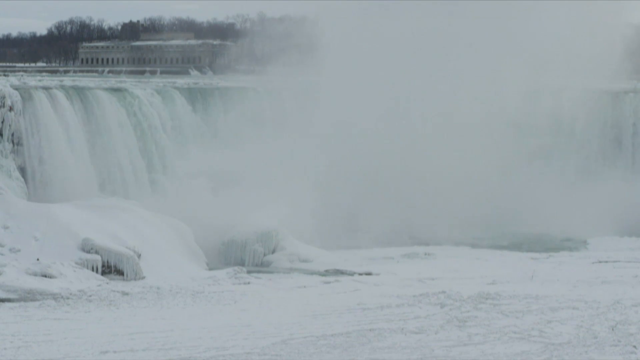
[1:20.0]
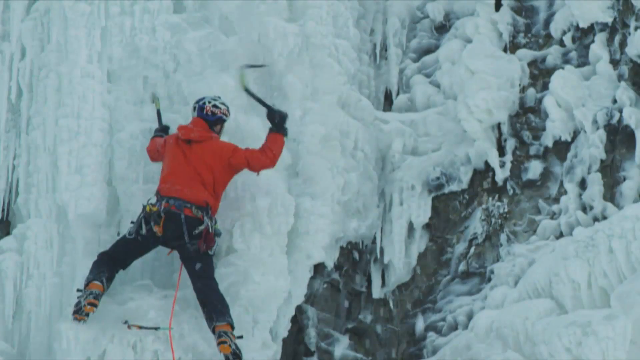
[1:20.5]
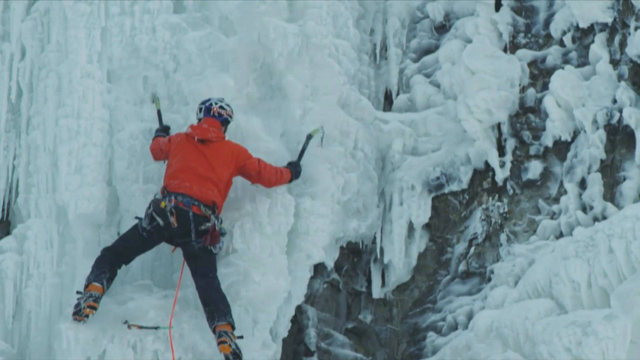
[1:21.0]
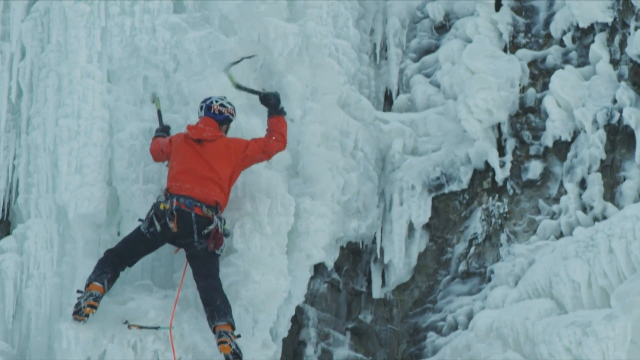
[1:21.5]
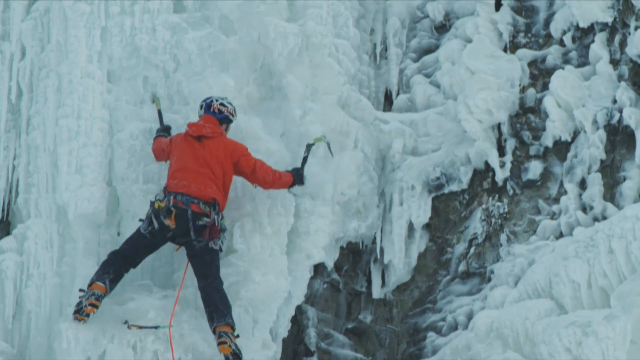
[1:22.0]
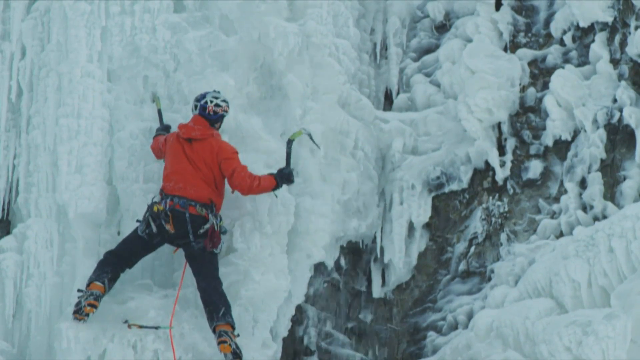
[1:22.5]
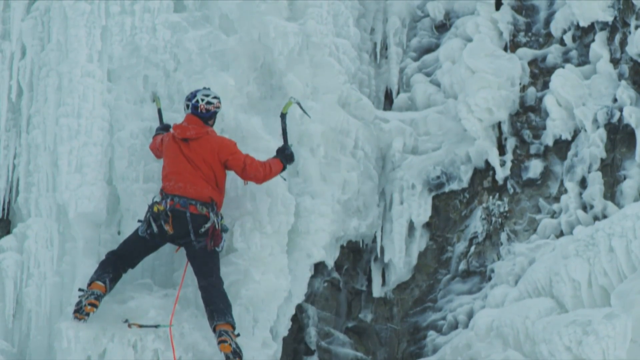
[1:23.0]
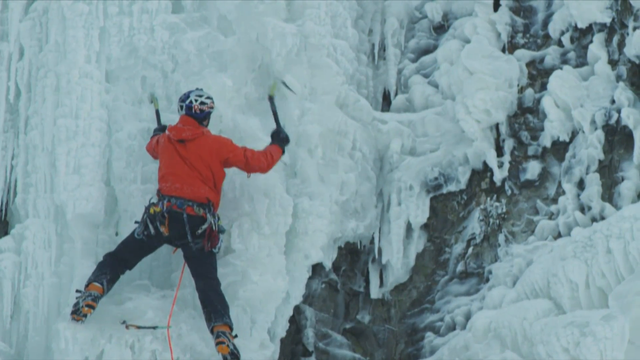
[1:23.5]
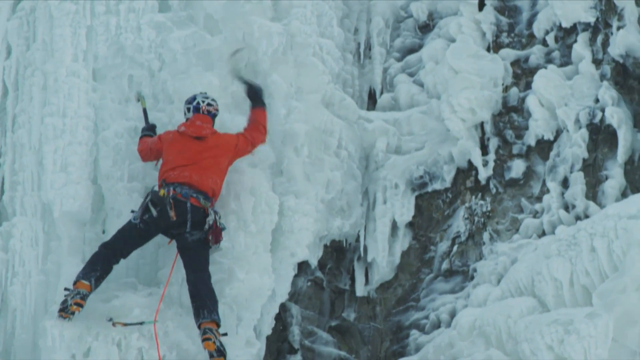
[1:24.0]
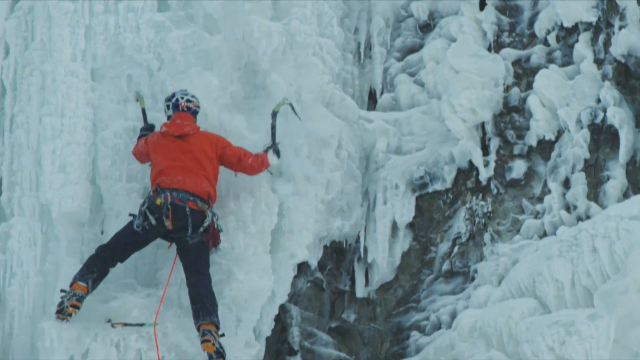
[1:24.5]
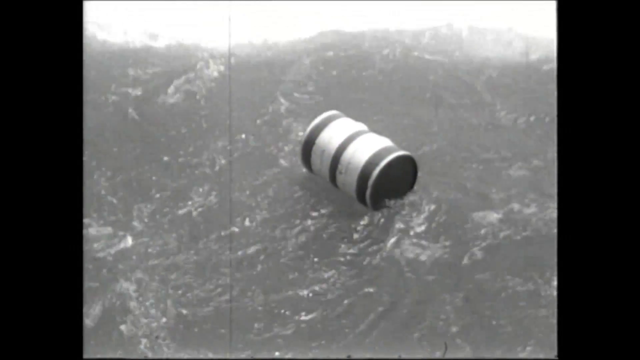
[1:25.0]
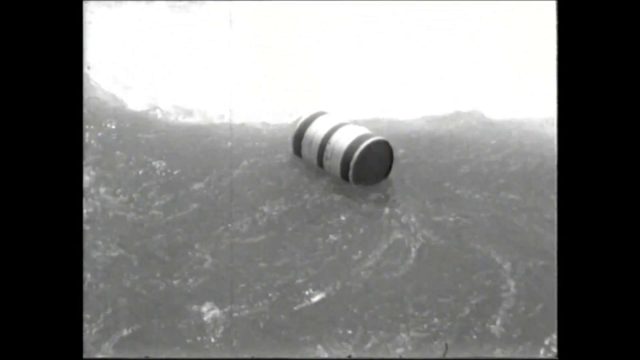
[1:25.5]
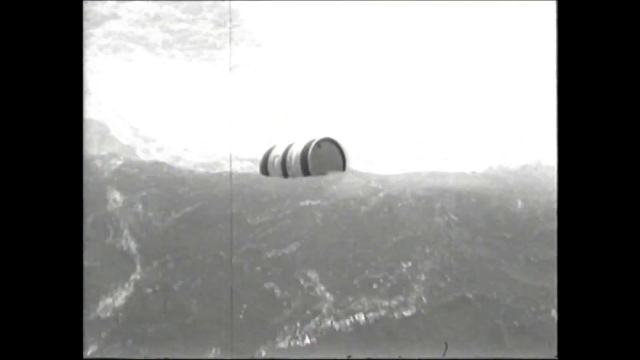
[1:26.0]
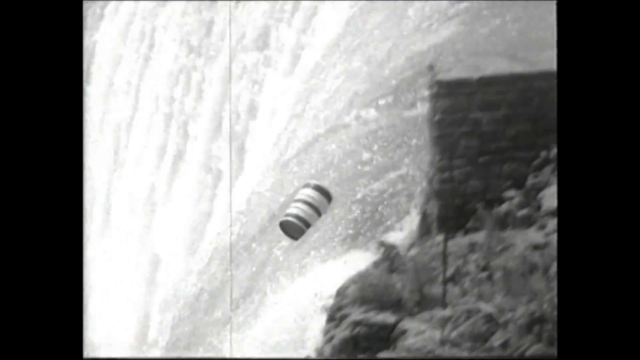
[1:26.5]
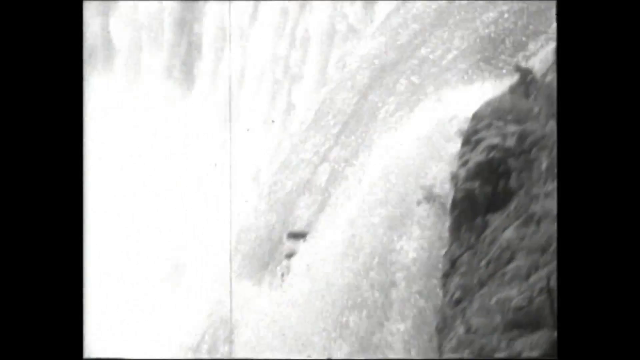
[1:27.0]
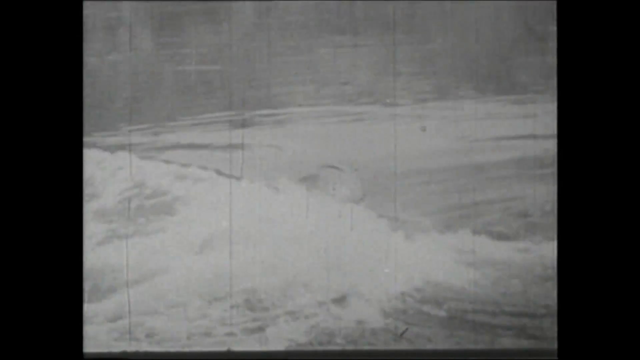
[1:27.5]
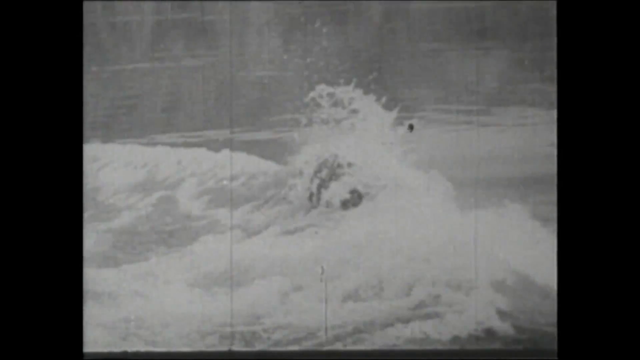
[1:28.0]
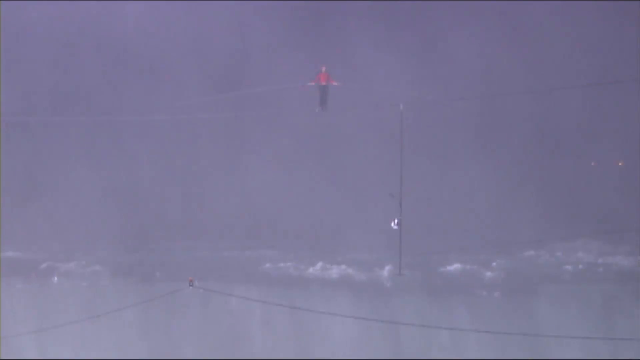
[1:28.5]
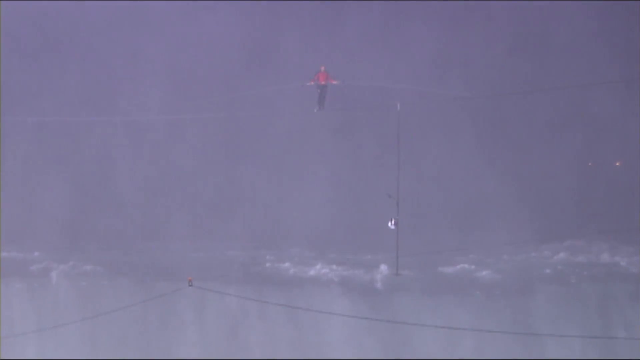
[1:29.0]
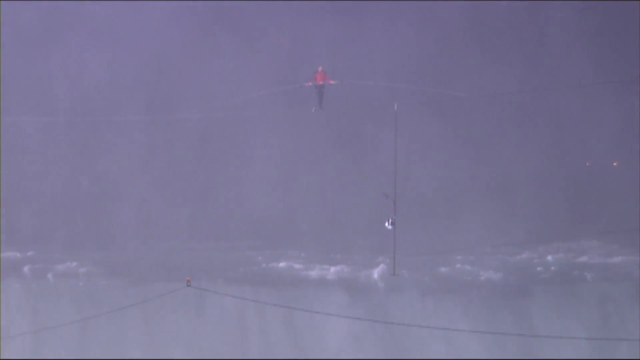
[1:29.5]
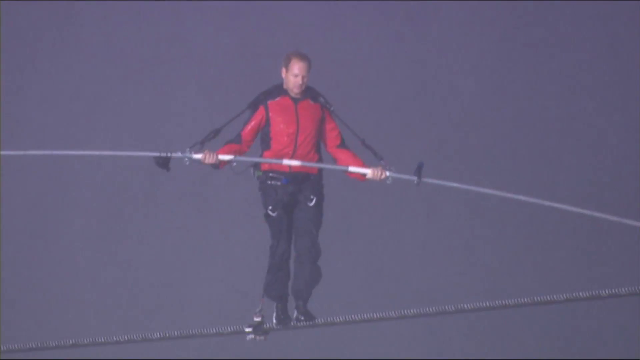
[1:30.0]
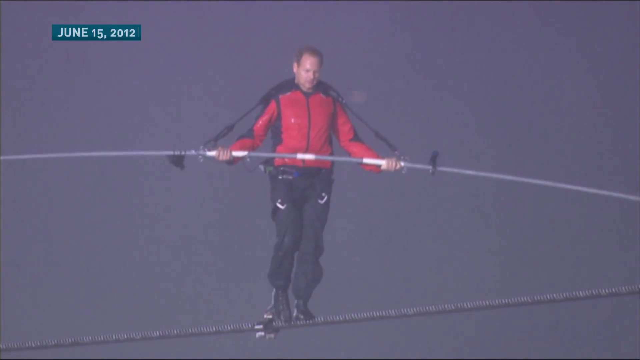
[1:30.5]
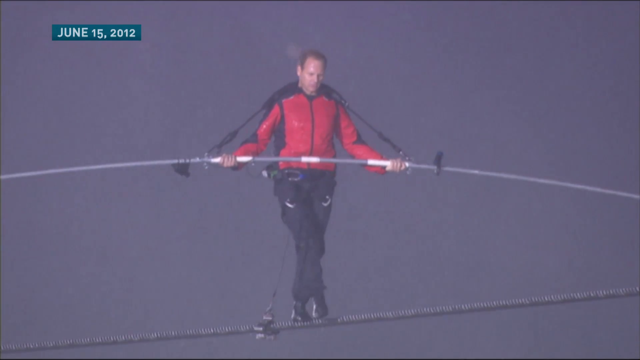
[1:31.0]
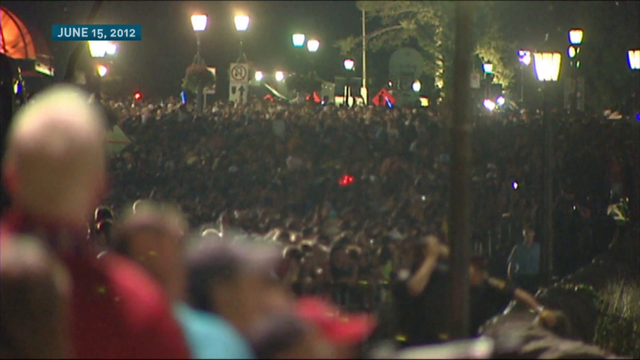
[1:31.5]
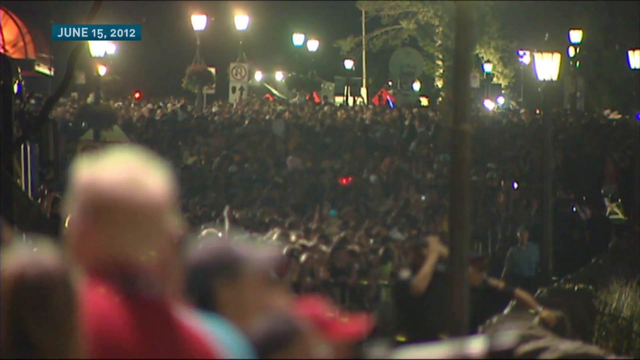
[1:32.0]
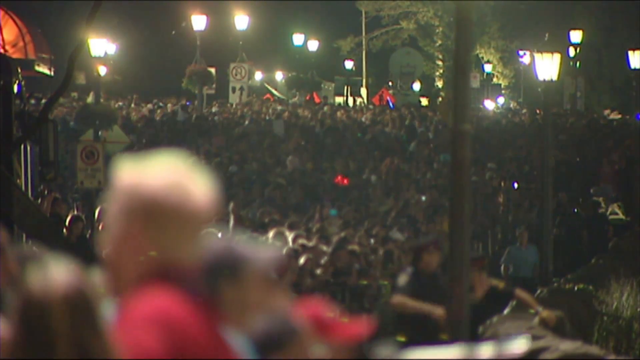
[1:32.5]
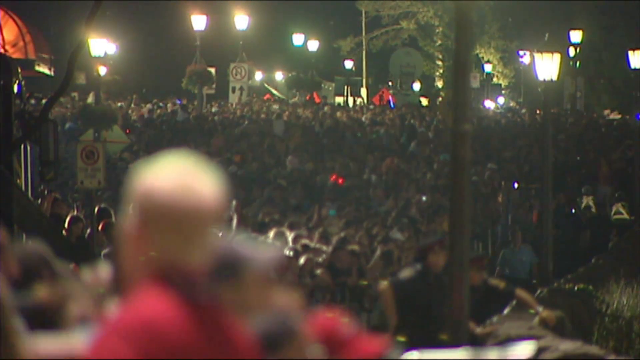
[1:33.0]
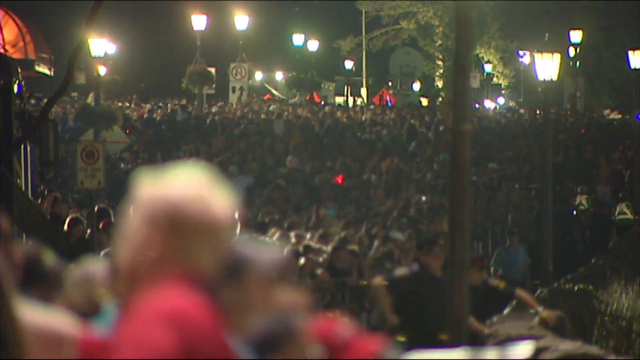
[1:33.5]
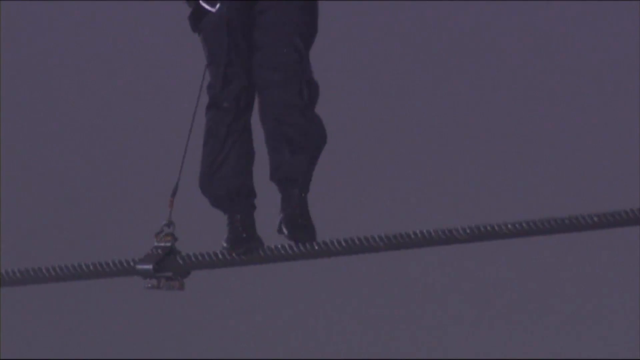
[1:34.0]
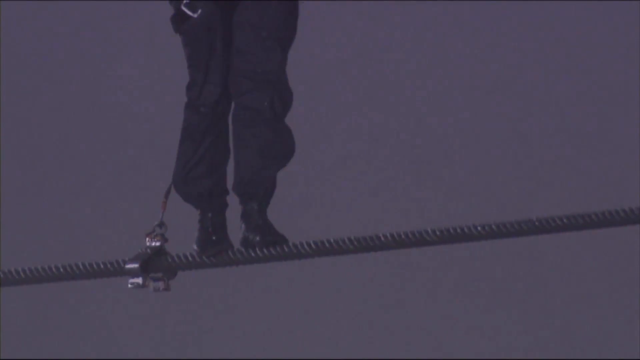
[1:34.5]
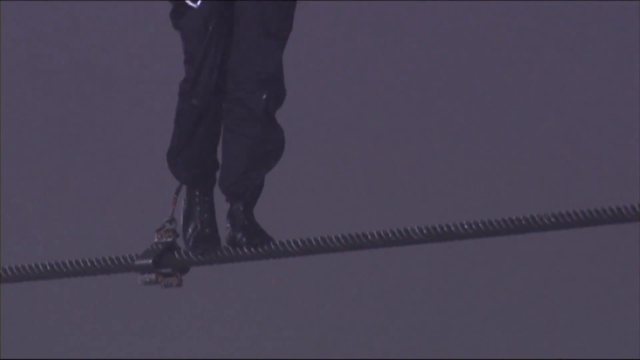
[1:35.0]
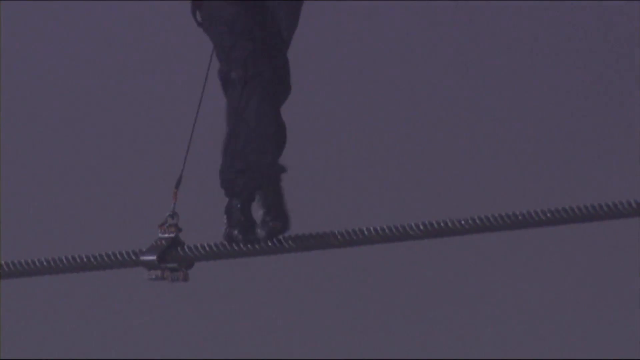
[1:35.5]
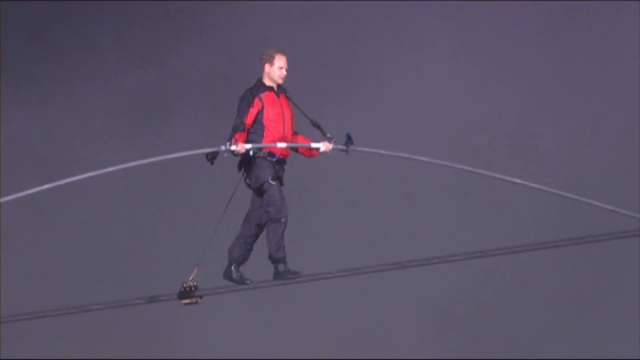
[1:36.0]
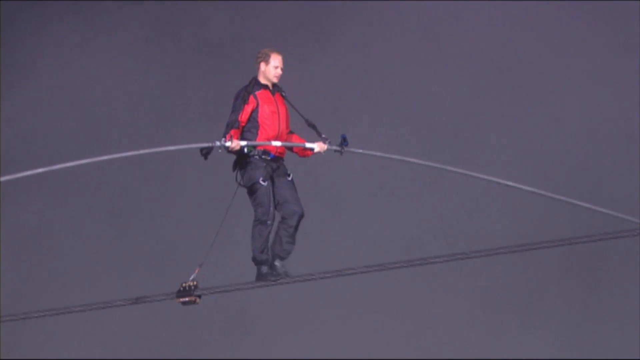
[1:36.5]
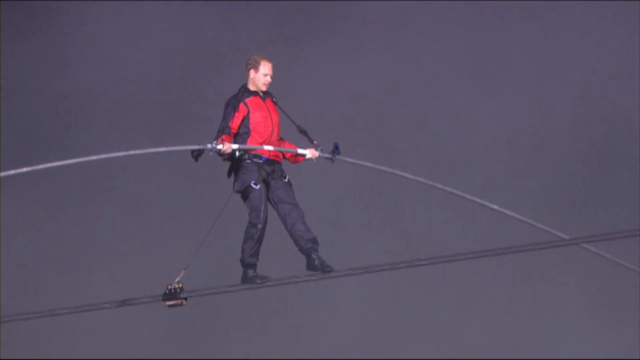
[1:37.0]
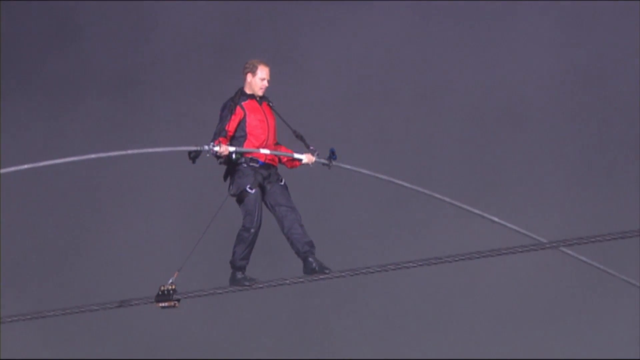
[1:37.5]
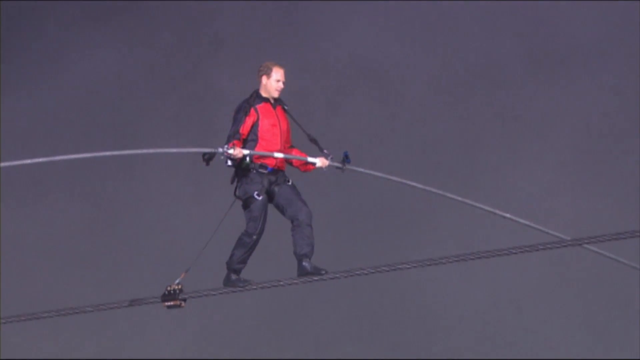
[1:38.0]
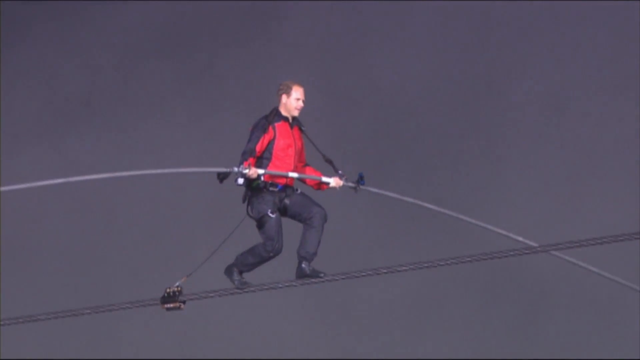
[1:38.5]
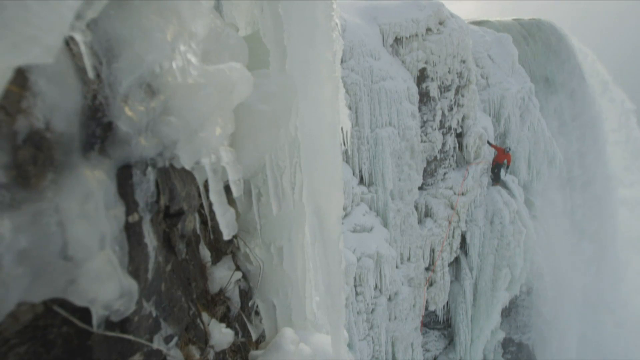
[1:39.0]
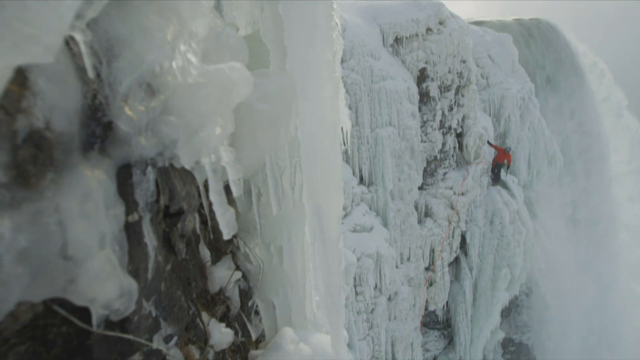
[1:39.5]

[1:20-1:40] A close-up shows the back of the man in his red jacket and dark pants, using his hook-shaped picks to chip at the ice. He is not getting purchase at this point, but he chips away some of the ice and it drops away. In some gray-colored water there is a white and black barrel; the picture does not appear to be in color. The barrel looks like it goes over the falls, falls down, and then floats around a little. Another image shows a man in a red jacket and black pants standing above, seemingly balancing on a kind of high wire over an area that looks like it might be over the falls. The next scene shows a crowded city area with the date "June 15th" on it, and people waving some sort of banners in celebration. A close-up shows a sort of large cable or rope mechanism, with a clasp moving along the rope, apparently a safety measure; it seems to be dragged along as the man walks. He holds a long bar, apparently to help him balance.